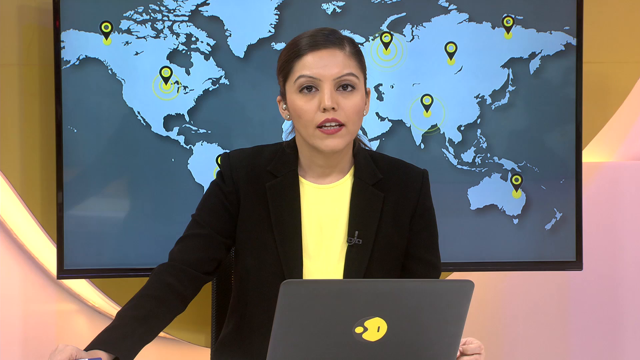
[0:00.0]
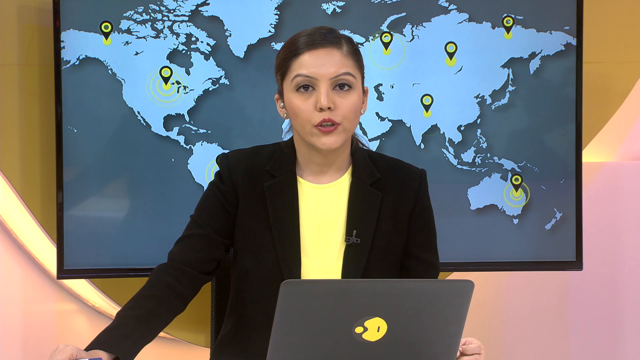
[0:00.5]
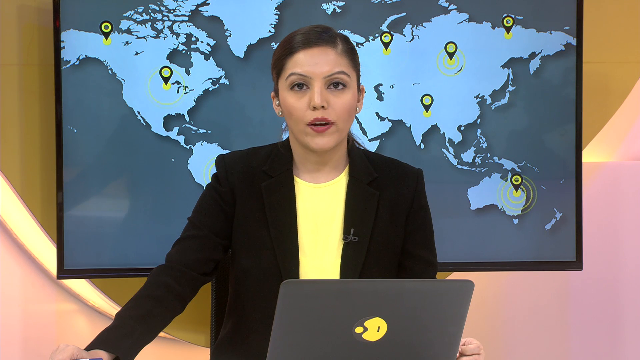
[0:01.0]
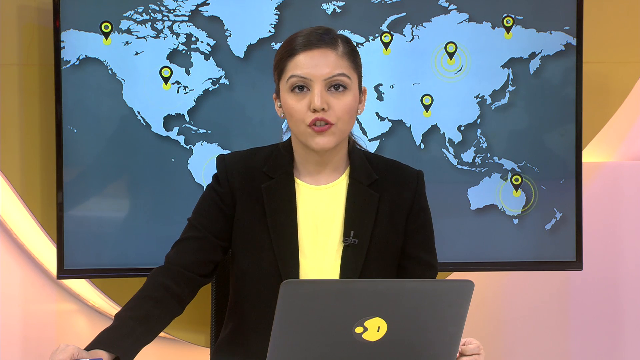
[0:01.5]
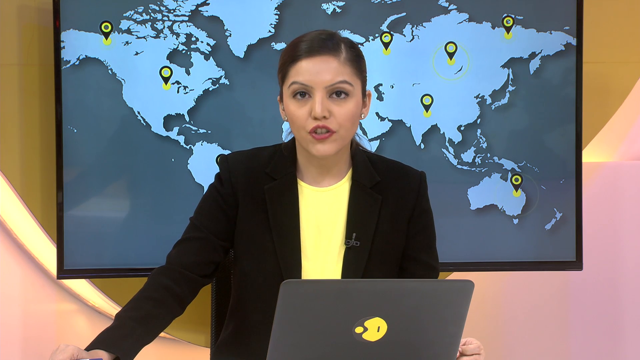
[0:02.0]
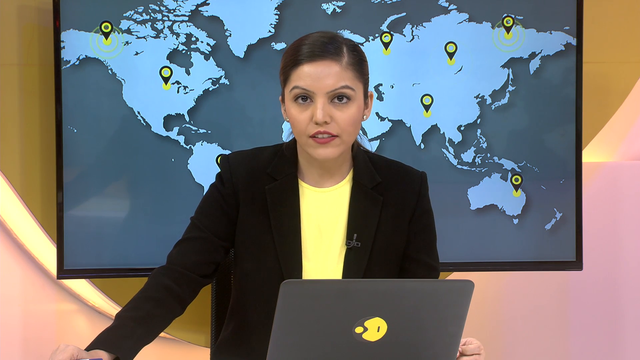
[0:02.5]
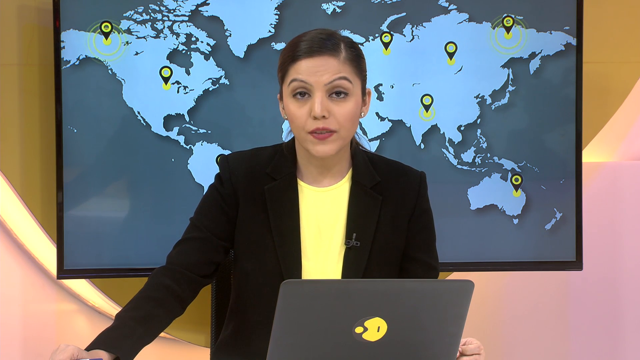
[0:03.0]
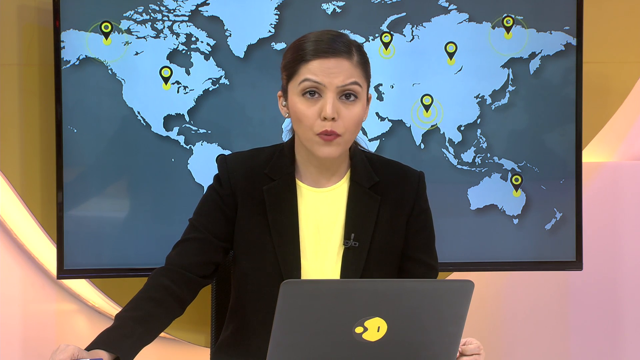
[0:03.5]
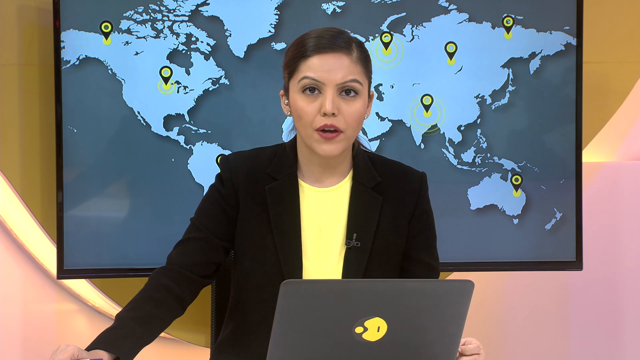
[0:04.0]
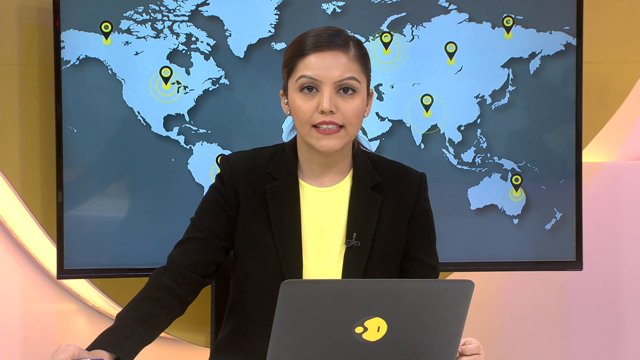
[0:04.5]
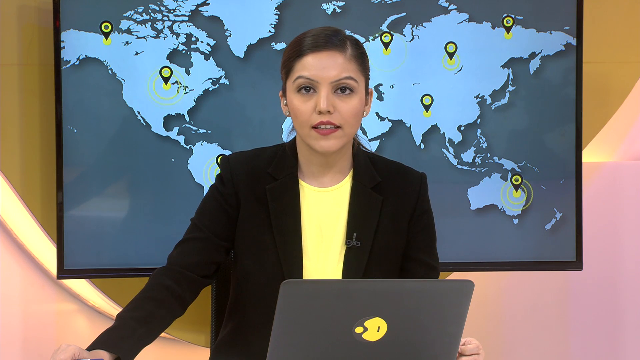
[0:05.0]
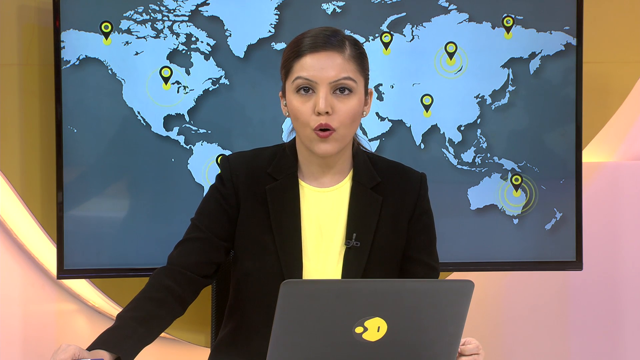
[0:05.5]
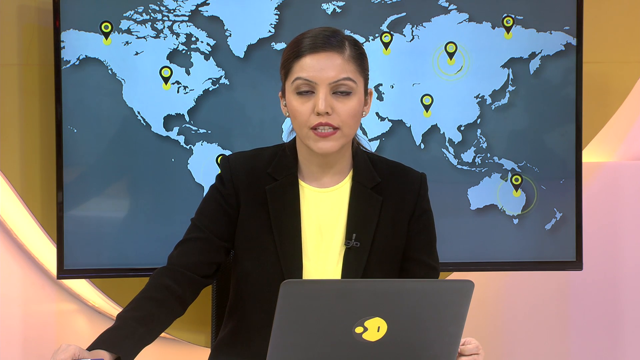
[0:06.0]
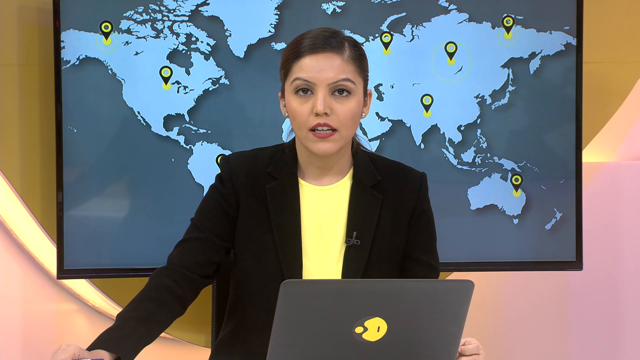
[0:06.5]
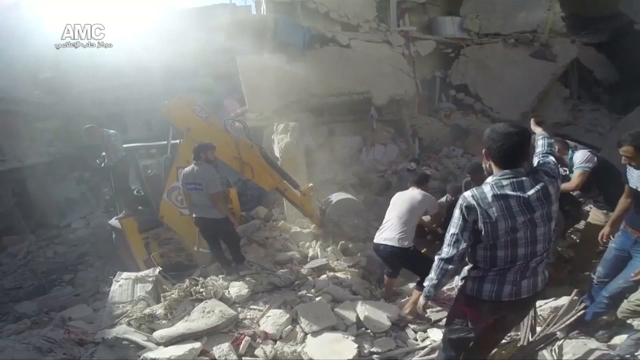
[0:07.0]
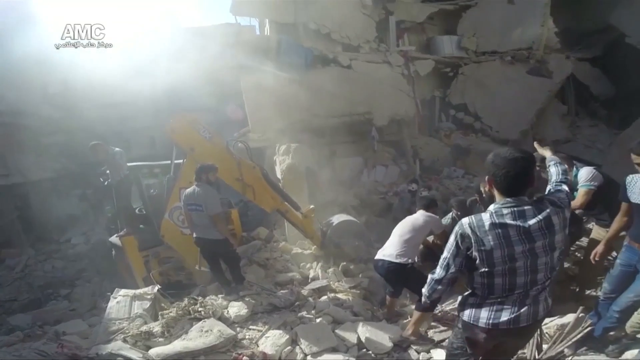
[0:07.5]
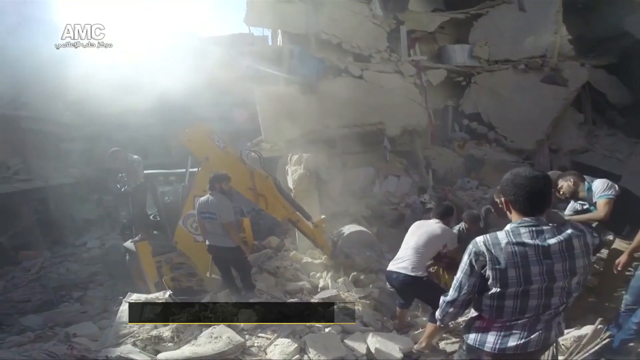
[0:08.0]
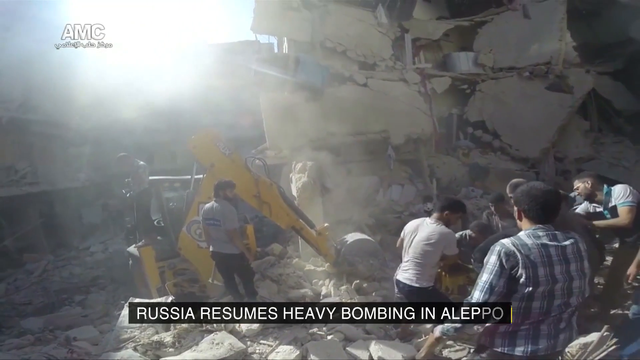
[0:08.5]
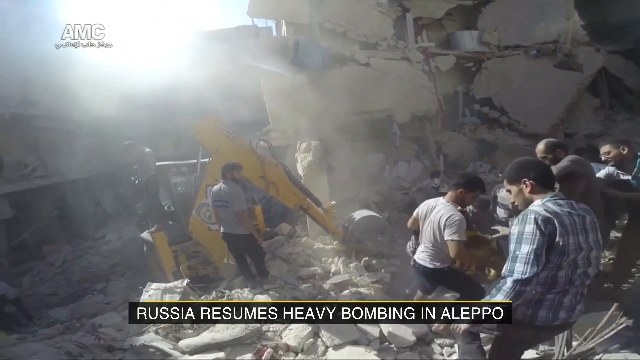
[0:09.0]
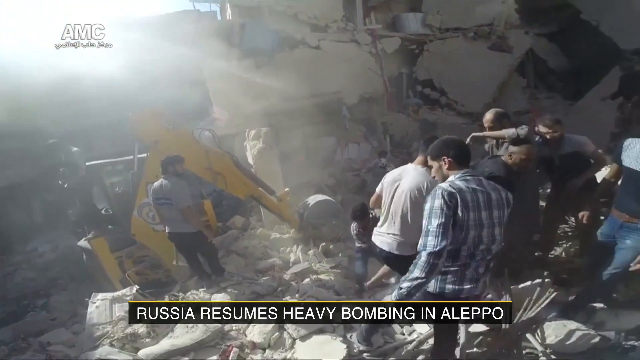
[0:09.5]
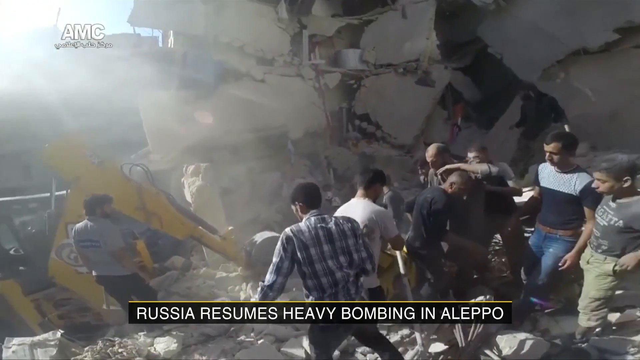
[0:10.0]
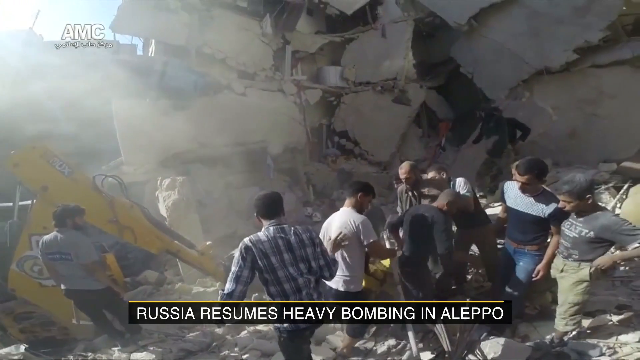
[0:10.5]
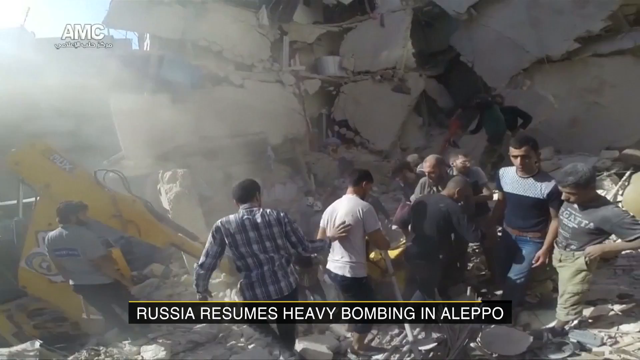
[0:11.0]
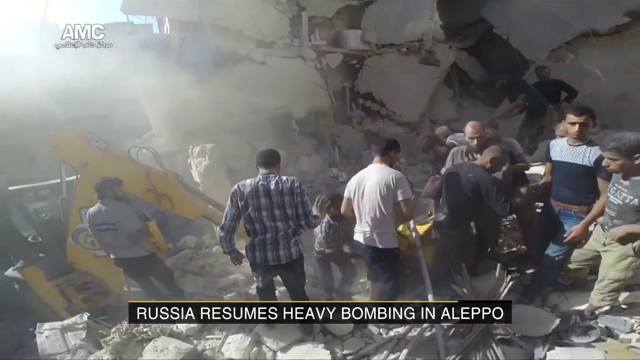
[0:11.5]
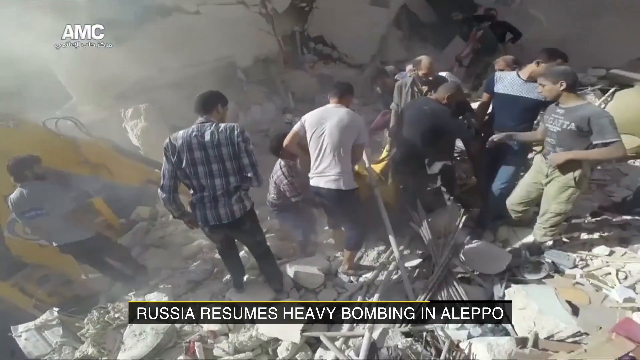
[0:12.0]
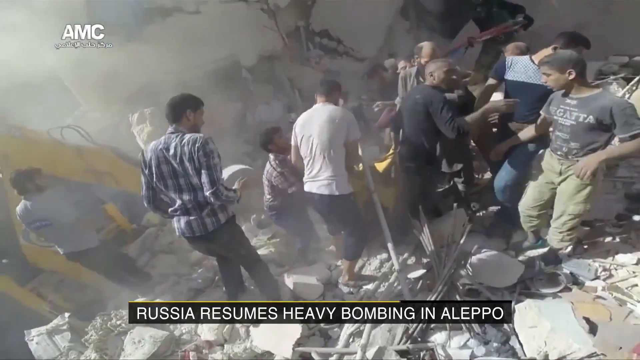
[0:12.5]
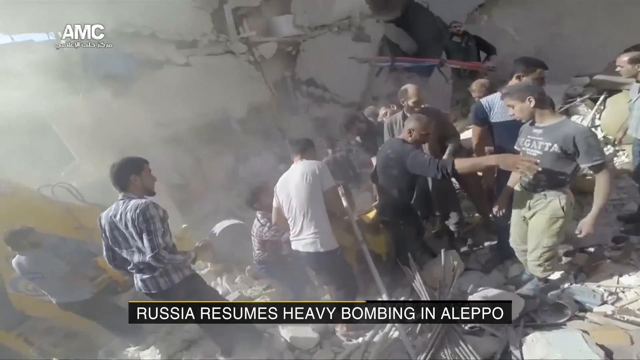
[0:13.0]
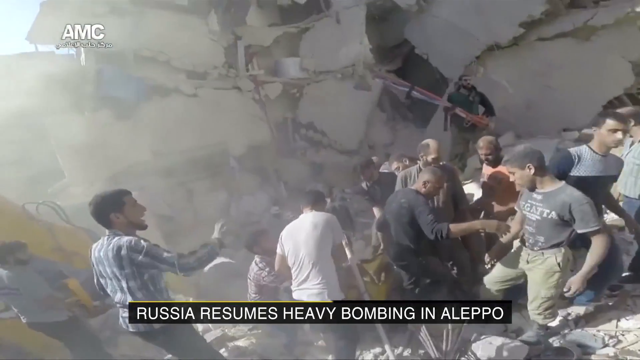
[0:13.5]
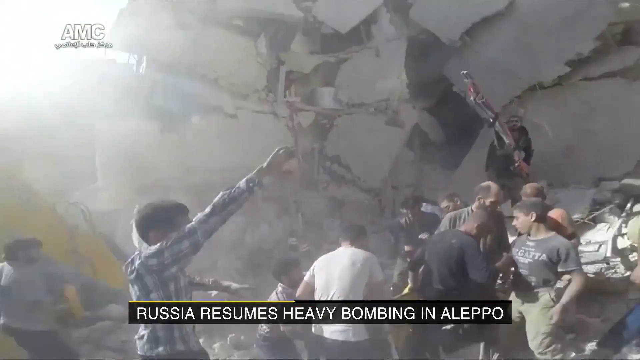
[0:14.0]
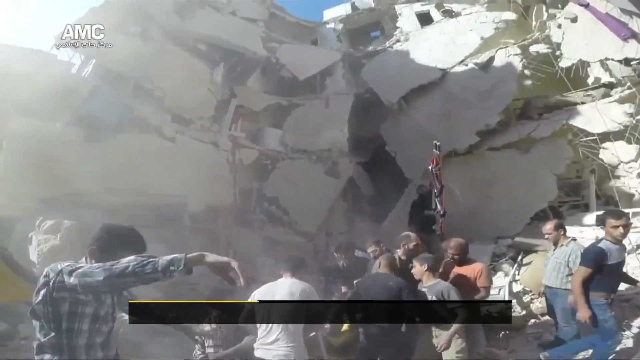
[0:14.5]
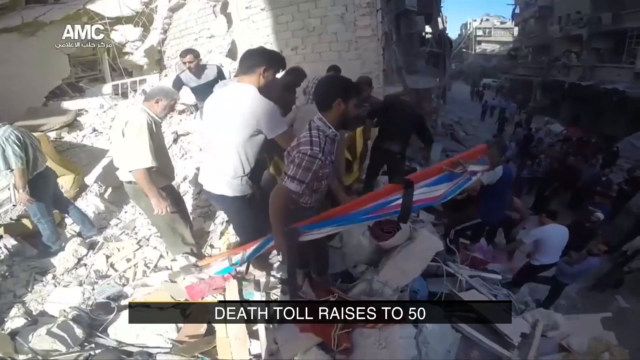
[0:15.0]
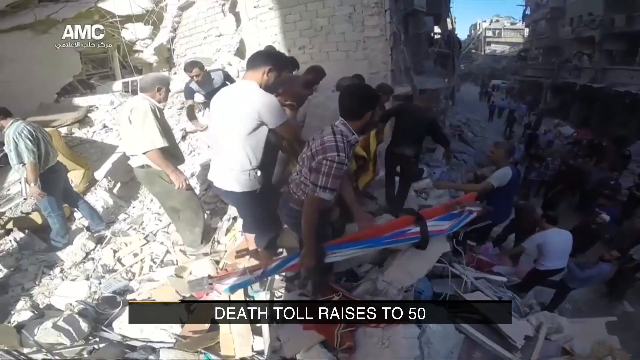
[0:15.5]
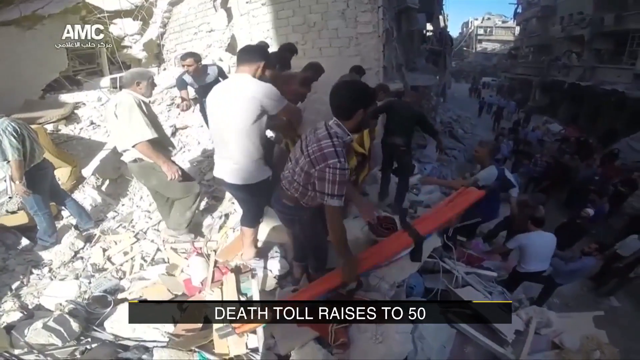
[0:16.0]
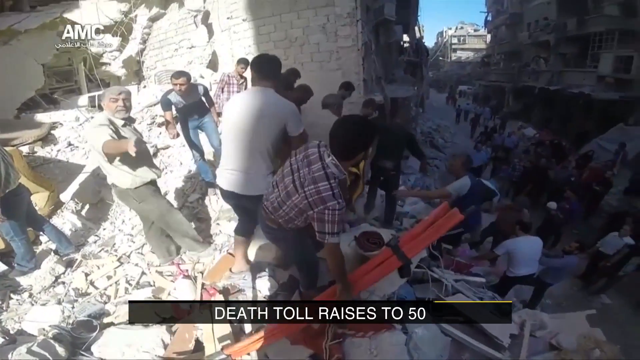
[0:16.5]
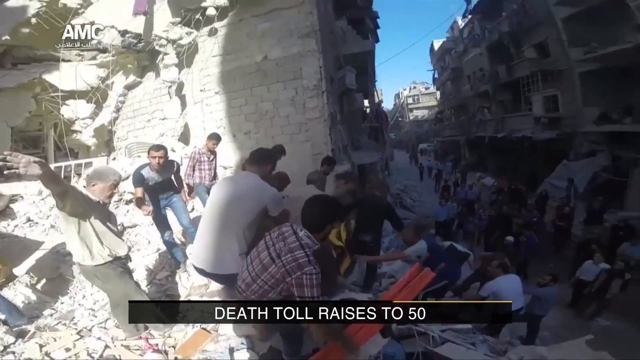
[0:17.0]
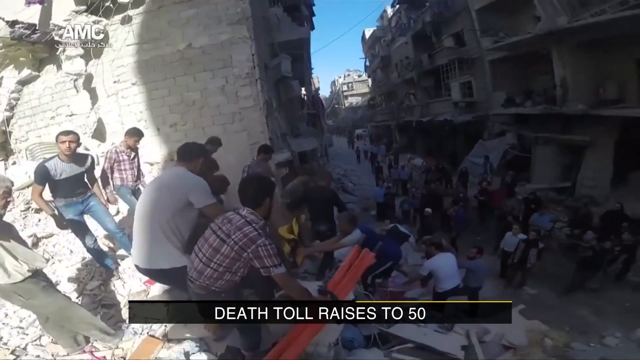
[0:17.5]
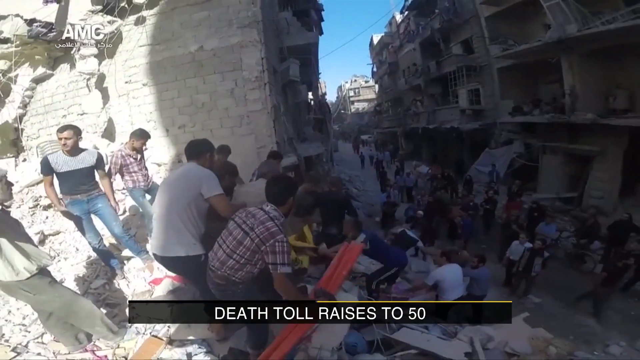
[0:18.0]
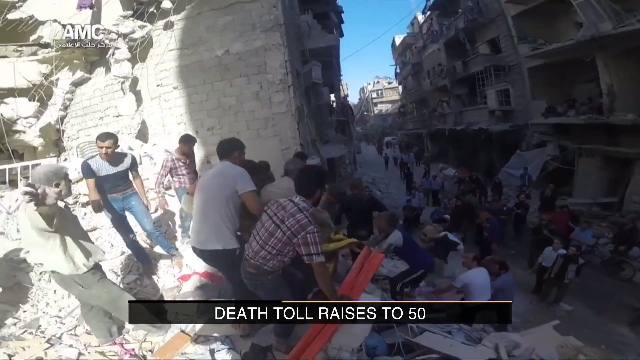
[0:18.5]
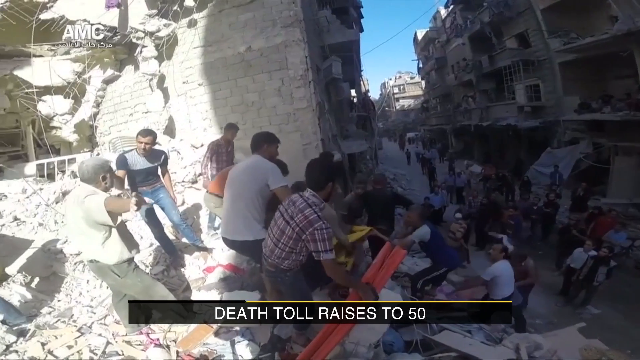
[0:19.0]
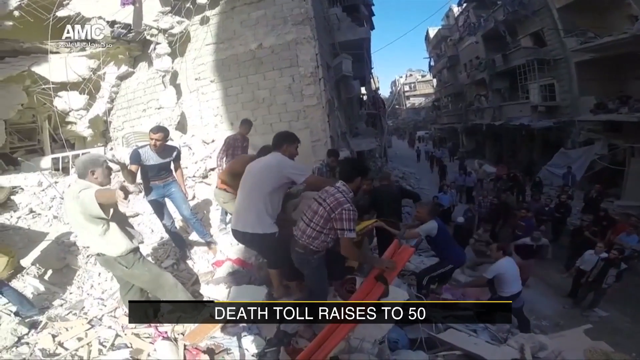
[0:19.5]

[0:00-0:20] The wide-format video shows what appears to be a news broadcast. A woman is in the center, visible from just about below her elbows up. She is probably in her 20s, white, with darker brown hair that seems to be pulled back, and red lipstick. She wears a yellow undershirt with a black sports jacket over it. The back of a gray monitor is in front of her, and behind her a thin black-bezel TV shows a map of the earth, with the land in light blue and the water more turquoise. Several black and yellow pins mark the map: two in the US, one in South America, and one in Australia, with apparently four between the visible parts of Europe and Asia; she blocks most of Europe and Africa. She has a serious expression on her face. The video then cuts to a shot of several men with their backs to the camera, down in a big pile of rubble. A backhoe just left of center is digging right in the center.